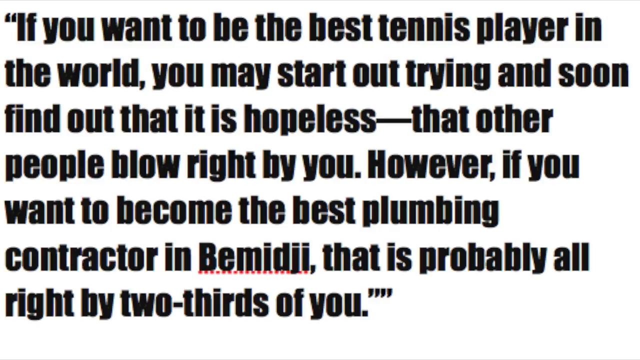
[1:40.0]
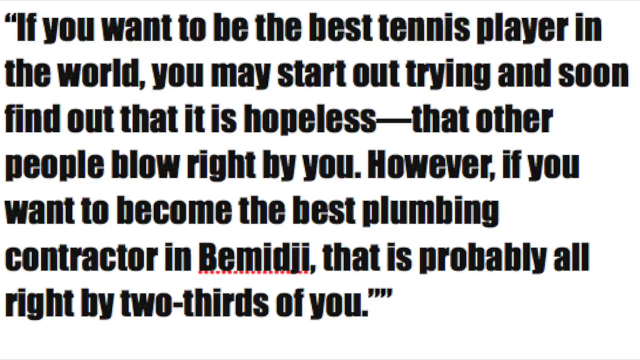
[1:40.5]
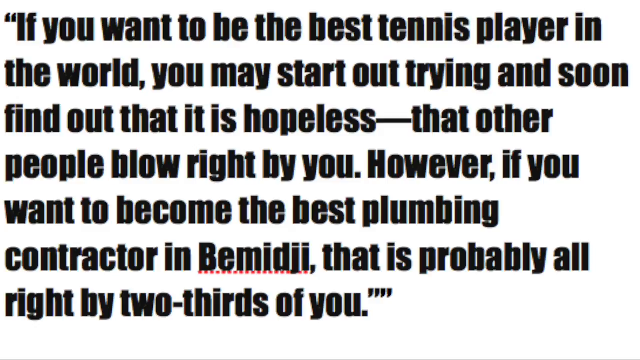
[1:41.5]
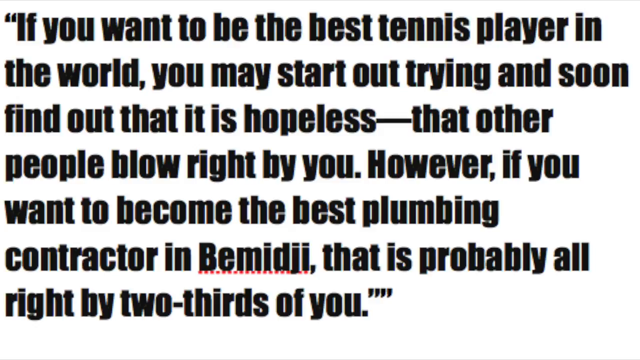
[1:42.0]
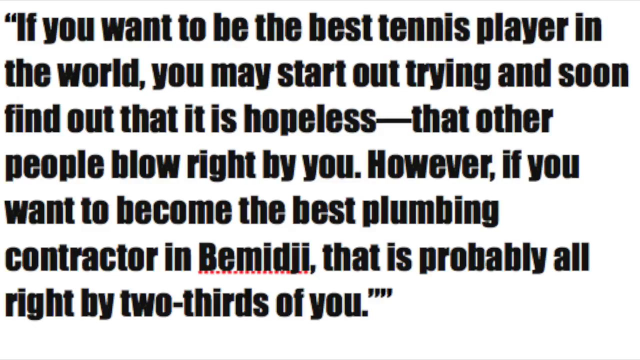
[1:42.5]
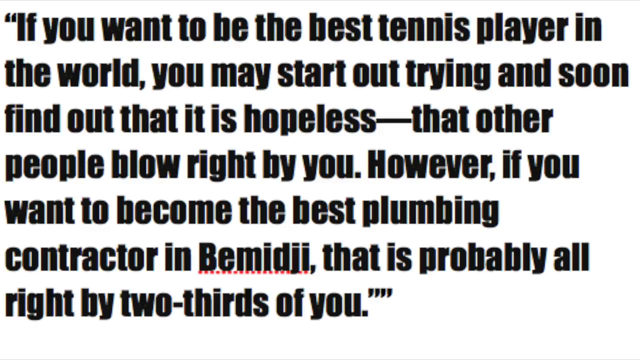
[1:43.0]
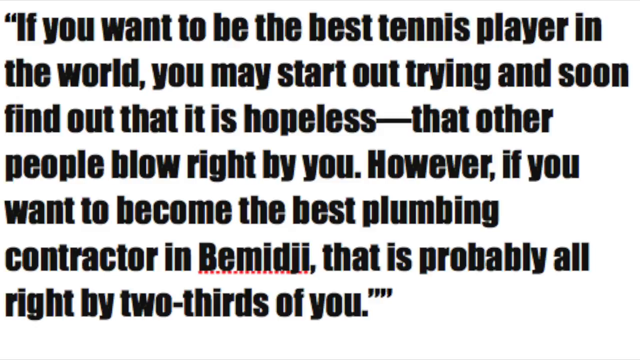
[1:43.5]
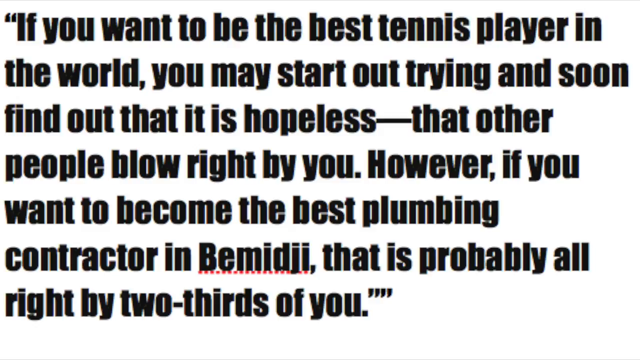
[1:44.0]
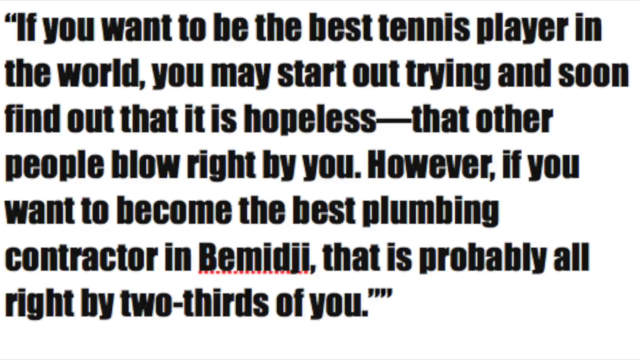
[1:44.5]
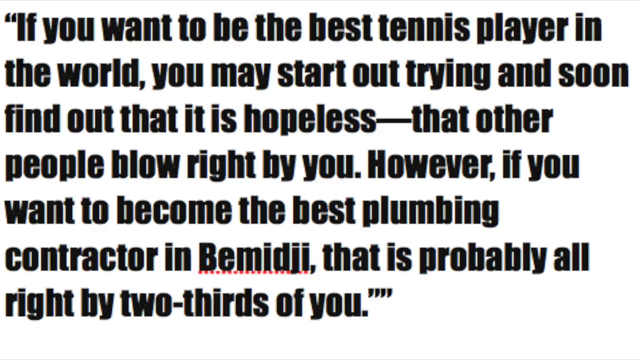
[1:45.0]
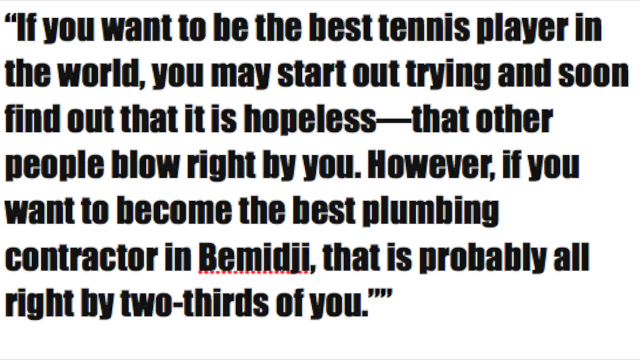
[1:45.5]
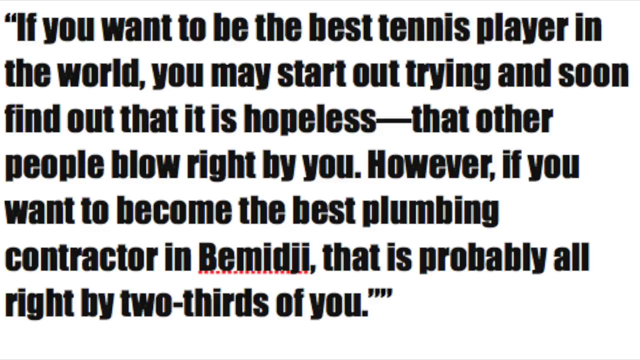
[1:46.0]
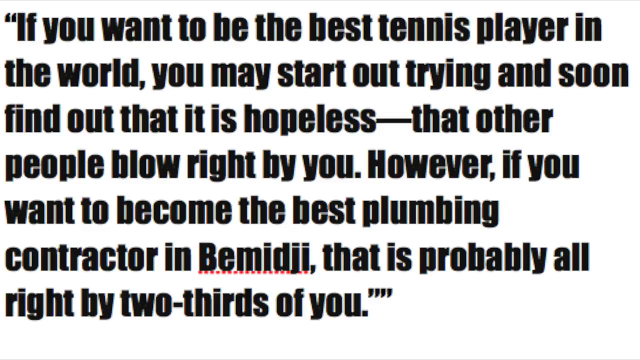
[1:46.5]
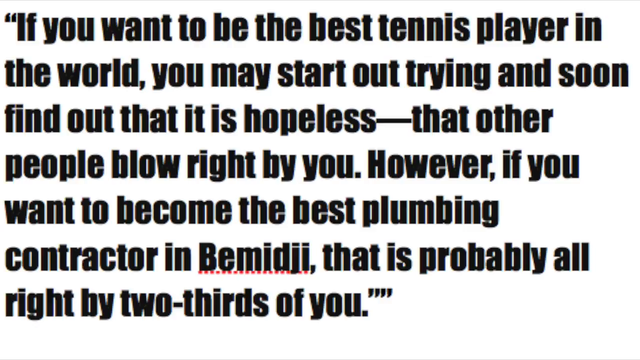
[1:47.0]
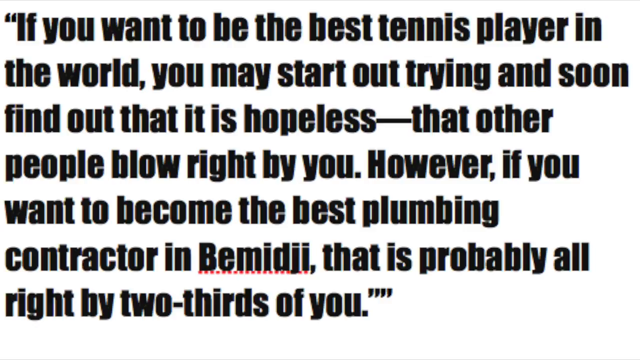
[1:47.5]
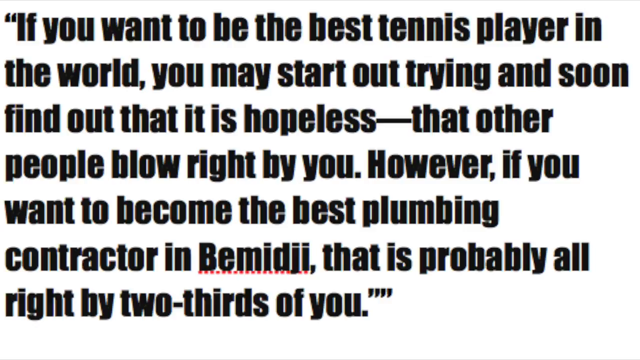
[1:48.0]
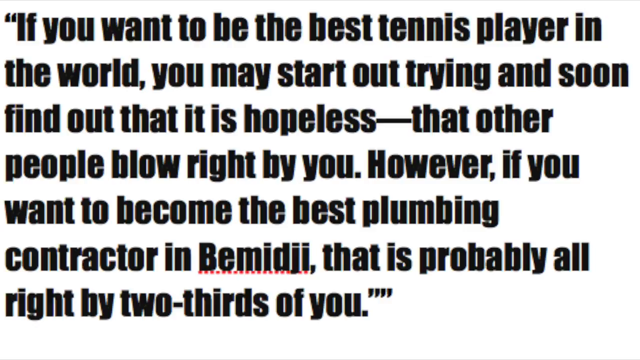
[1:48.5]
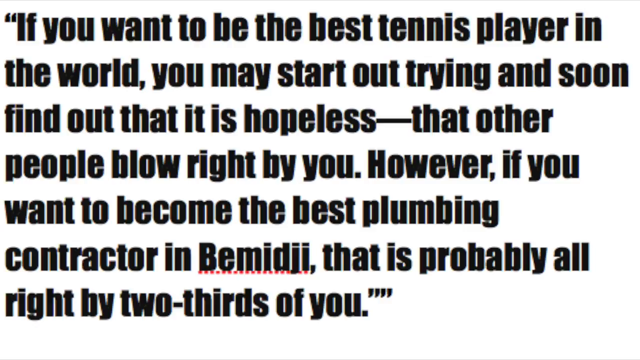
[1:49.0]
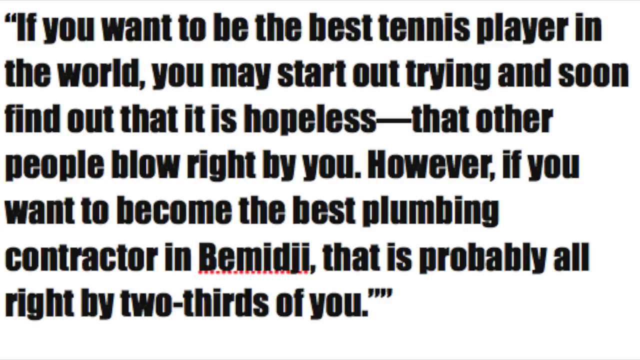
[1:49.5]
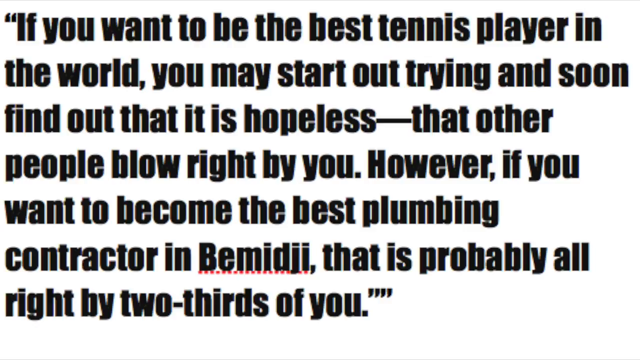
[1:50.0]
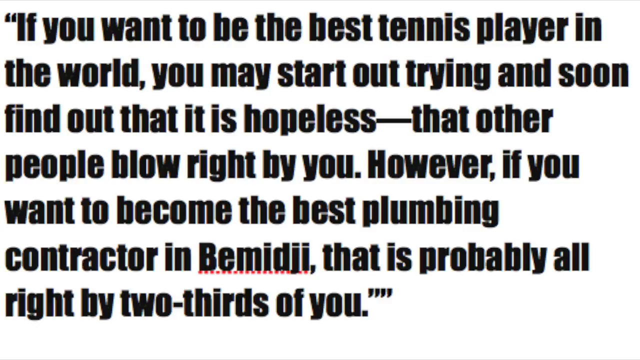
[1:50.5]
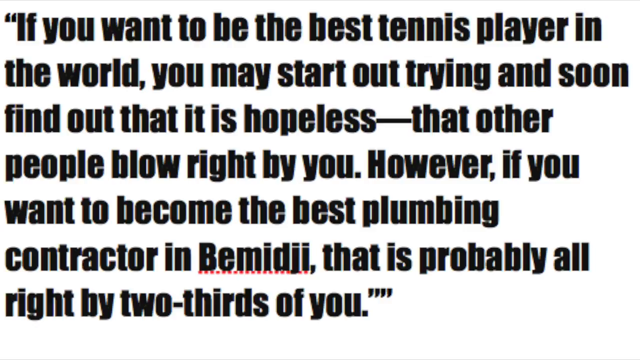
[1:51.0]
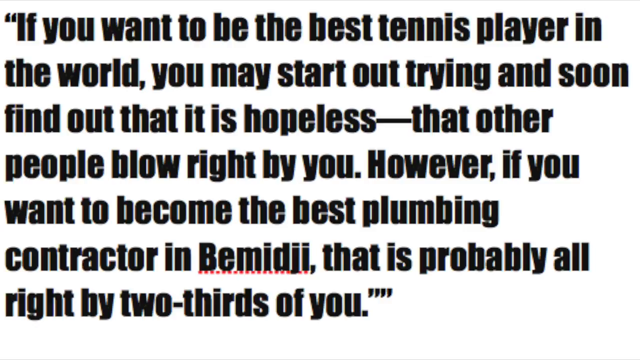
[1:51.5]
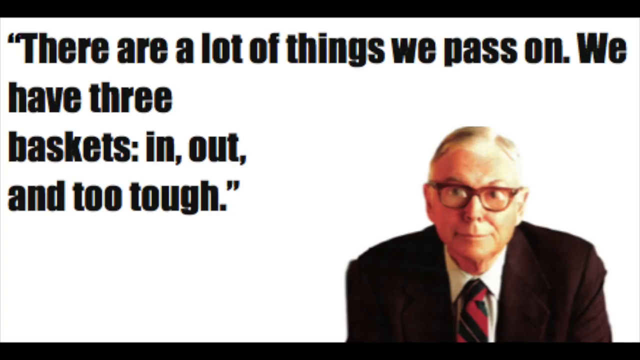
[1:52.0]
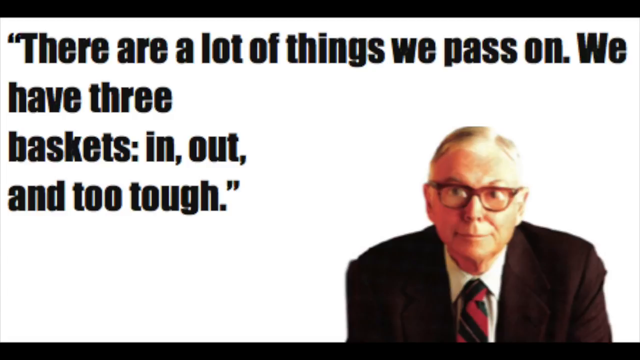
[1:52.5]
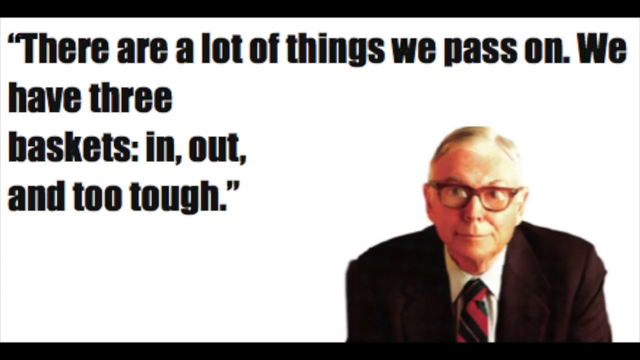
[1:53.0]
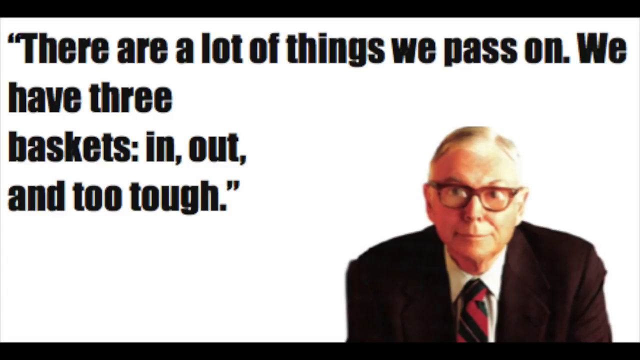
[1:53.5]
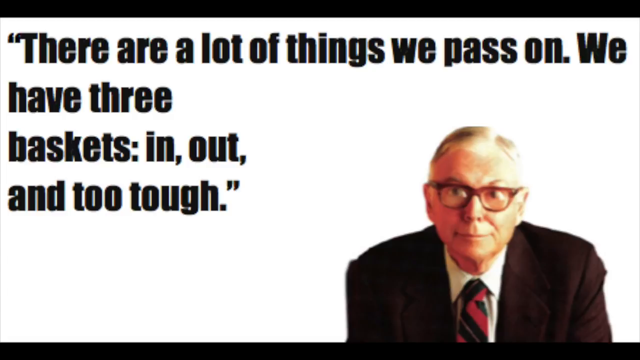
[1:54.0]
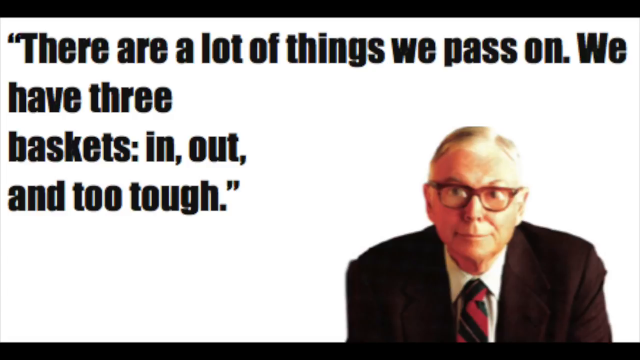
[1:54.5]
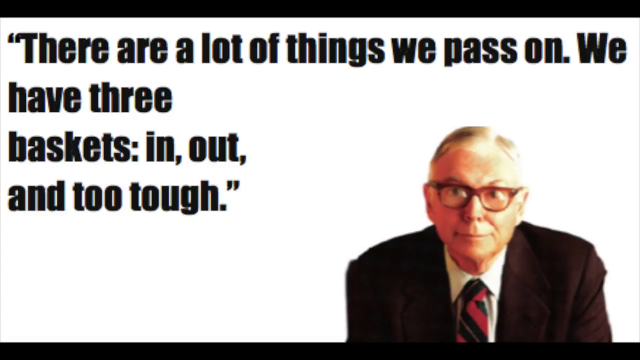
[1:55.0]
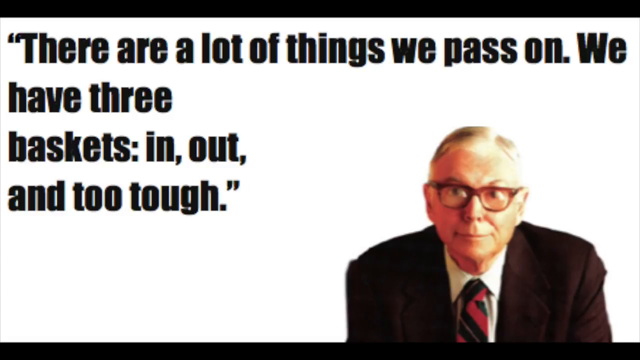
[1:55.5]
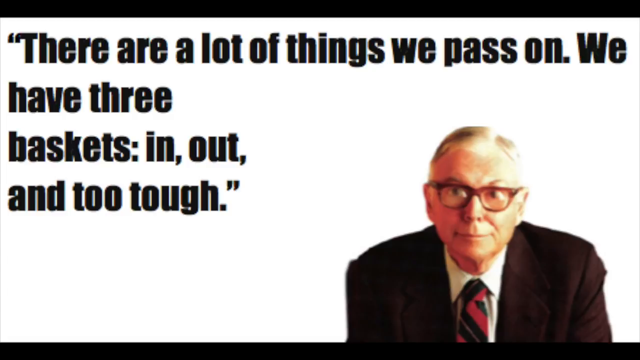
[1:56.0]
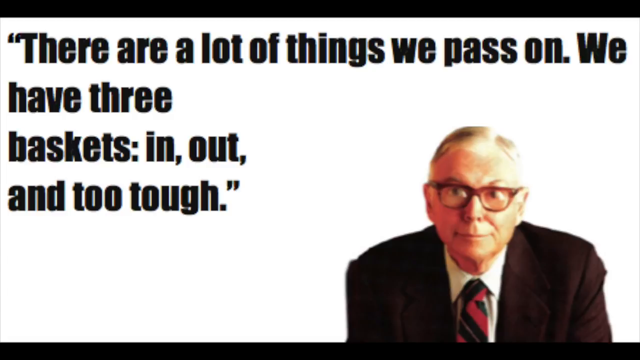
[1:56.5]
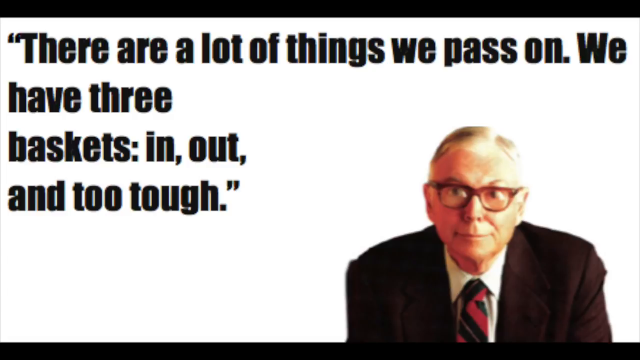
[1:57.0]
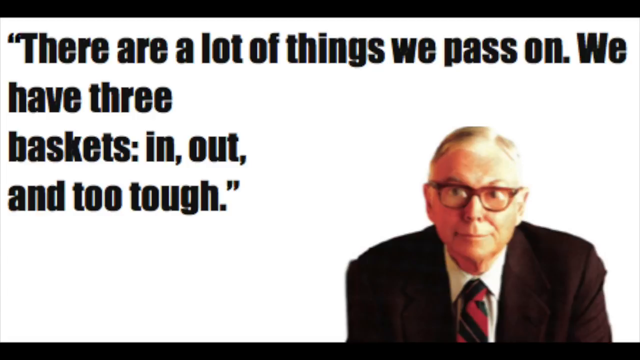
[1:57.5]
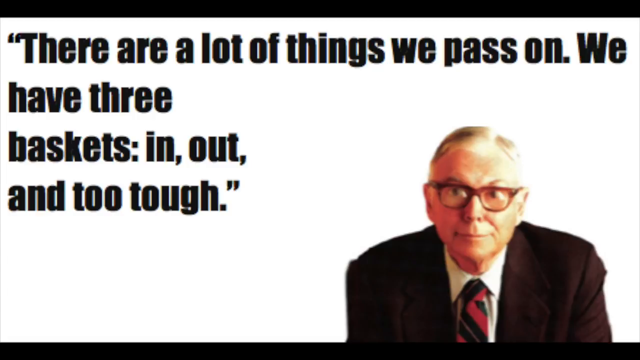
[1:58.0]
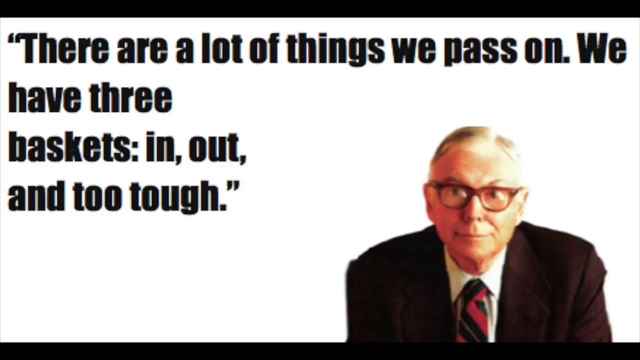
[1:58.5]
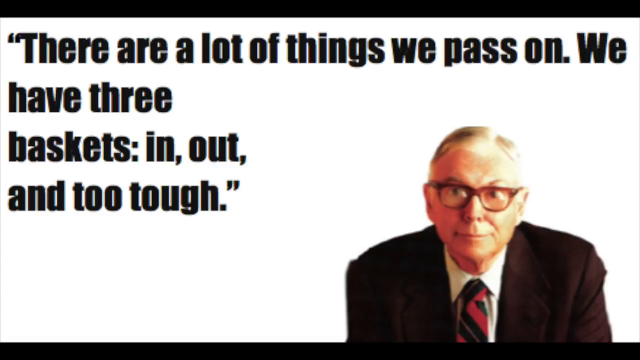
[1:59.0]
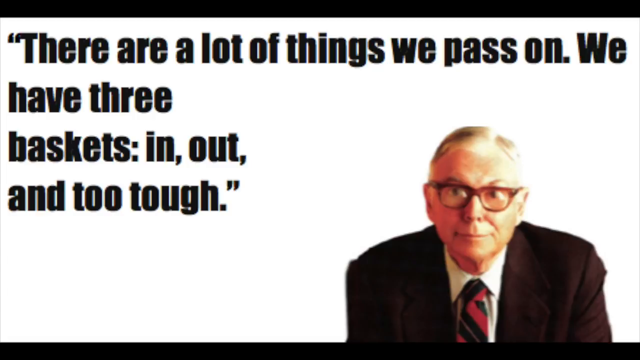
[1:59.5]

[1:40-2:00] The image of the condescending man is gone, leaving a solid white background with a large message, zoomed in on the text. It reads "if you want to be the best tennis player in the world you may start out trying and soon find out that it's hopeless that other people blow right by you. However if you want to become the best plumbing contractor in Bemidji that is probably all right by two-thirds of you." This message stays on the screen for a while. Another message then appears: "there are a lot of things we passed on. We have three baskets, in, out, and too tough."